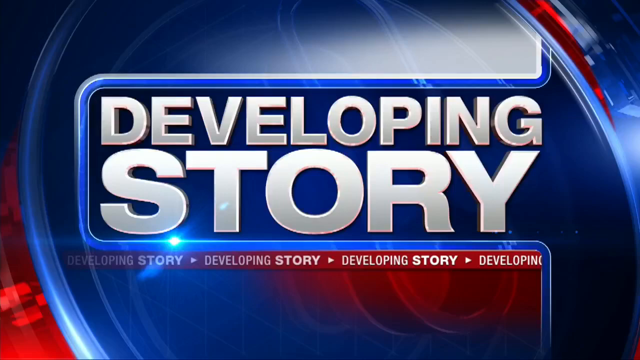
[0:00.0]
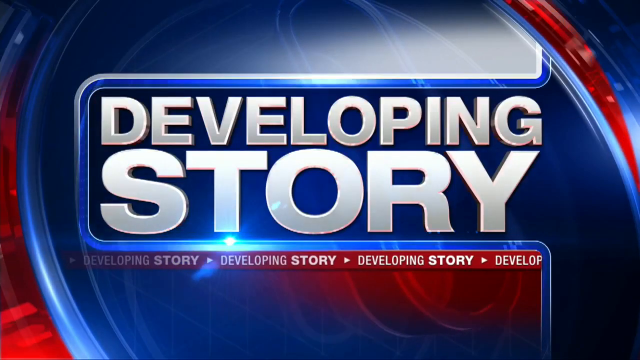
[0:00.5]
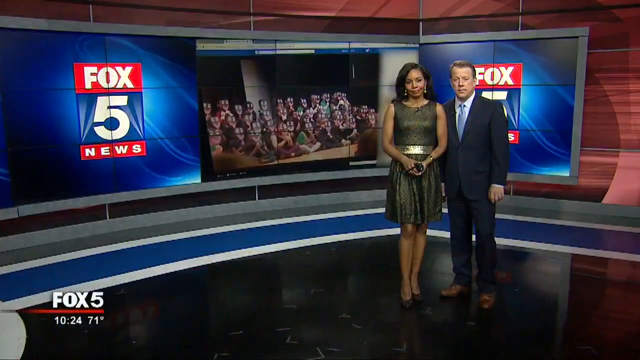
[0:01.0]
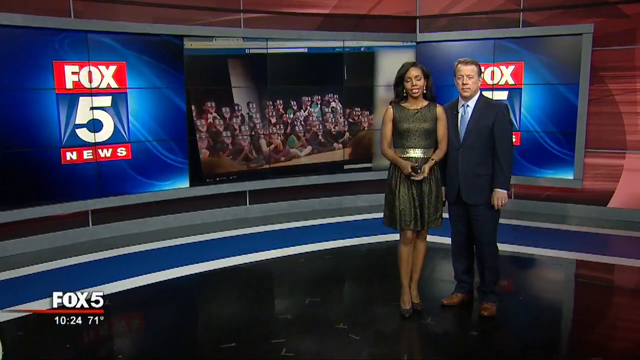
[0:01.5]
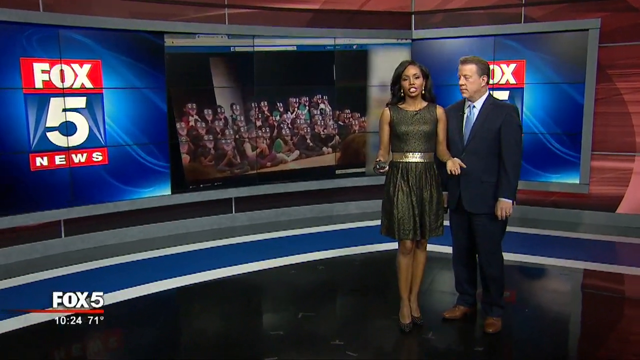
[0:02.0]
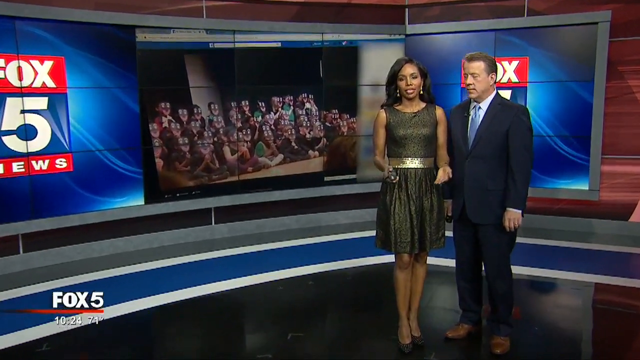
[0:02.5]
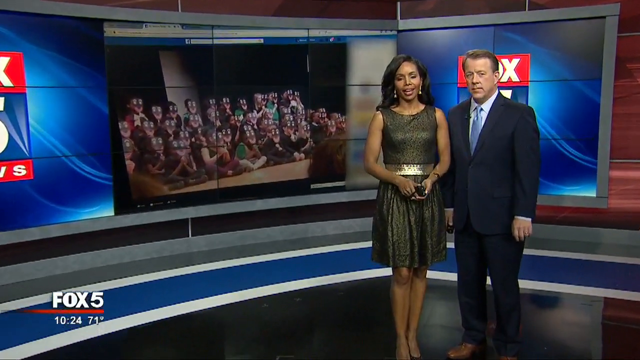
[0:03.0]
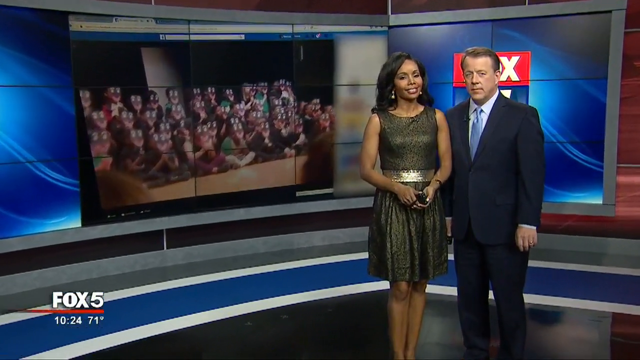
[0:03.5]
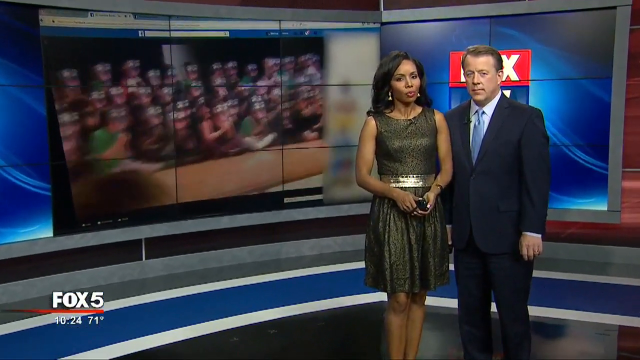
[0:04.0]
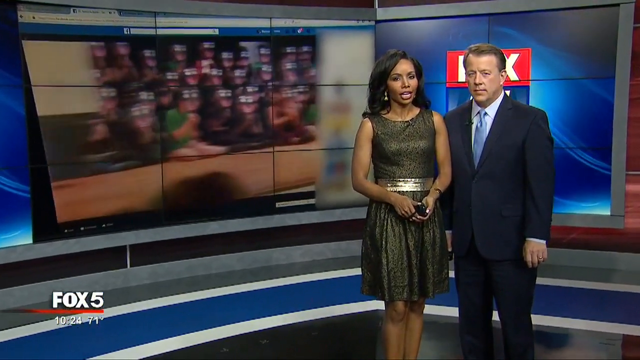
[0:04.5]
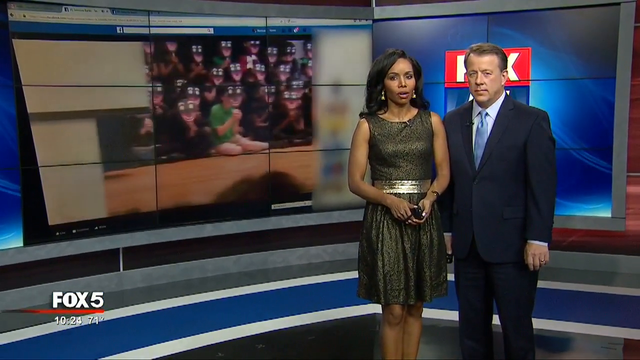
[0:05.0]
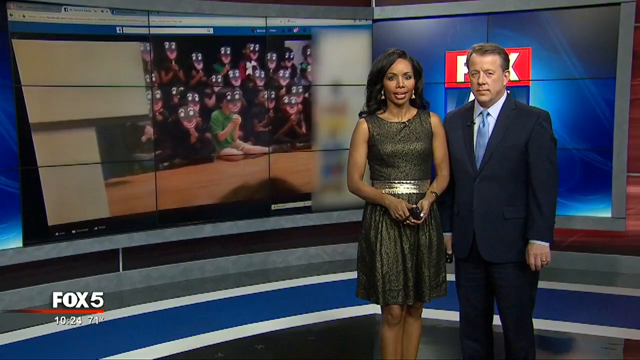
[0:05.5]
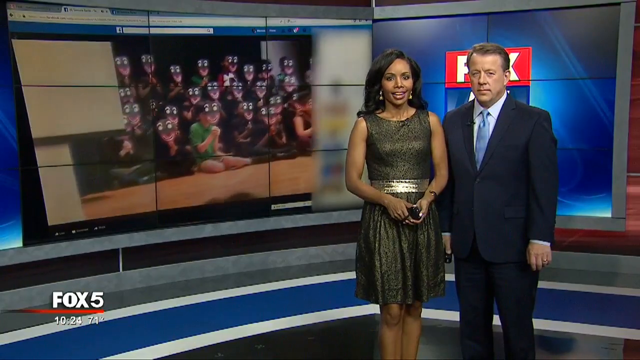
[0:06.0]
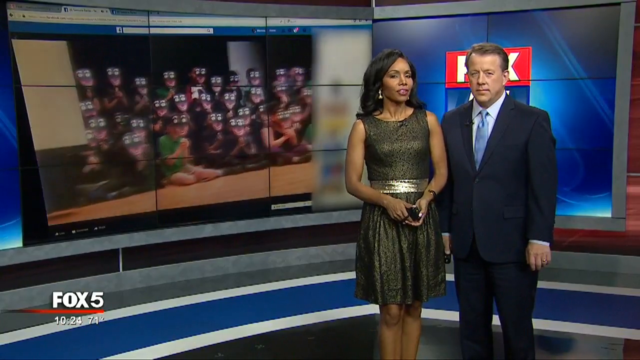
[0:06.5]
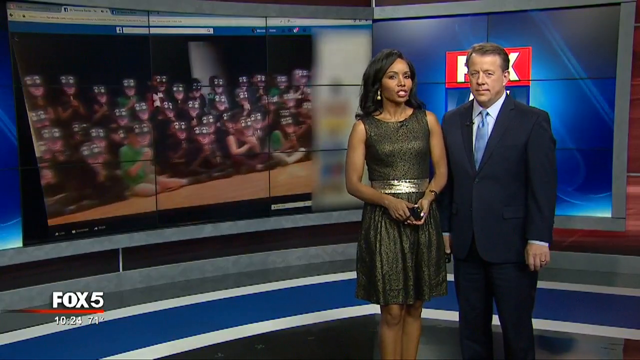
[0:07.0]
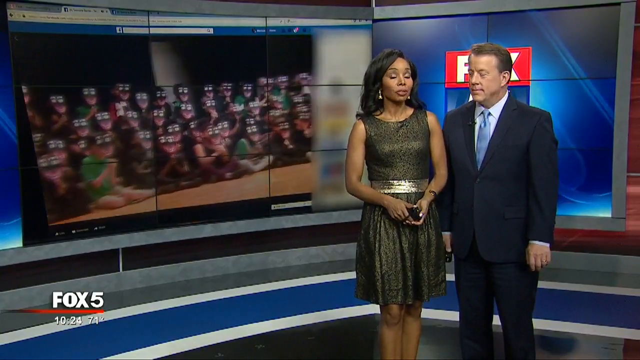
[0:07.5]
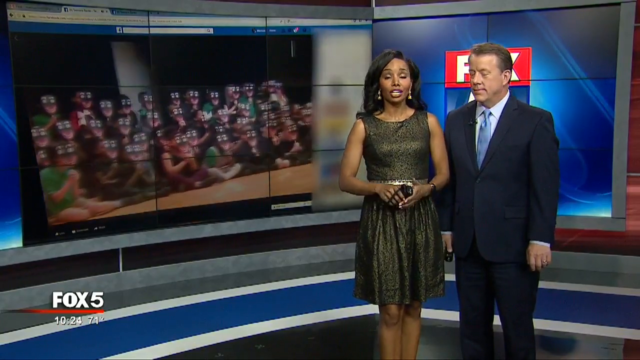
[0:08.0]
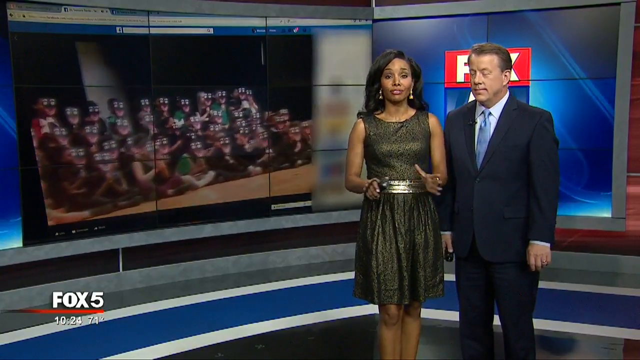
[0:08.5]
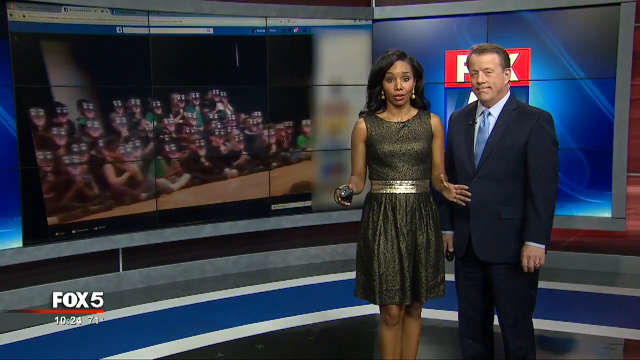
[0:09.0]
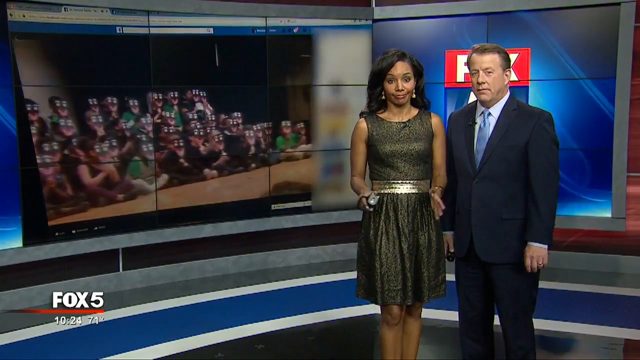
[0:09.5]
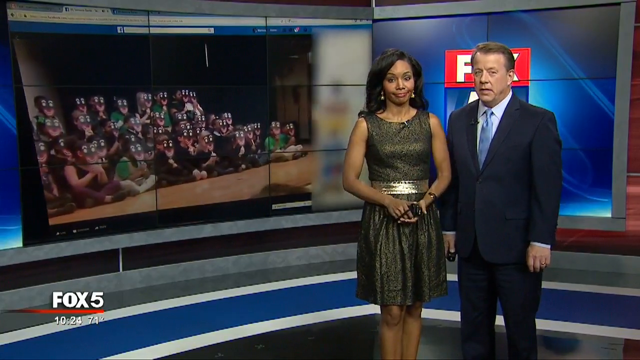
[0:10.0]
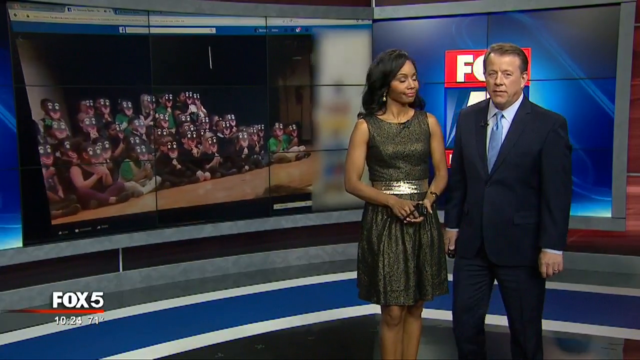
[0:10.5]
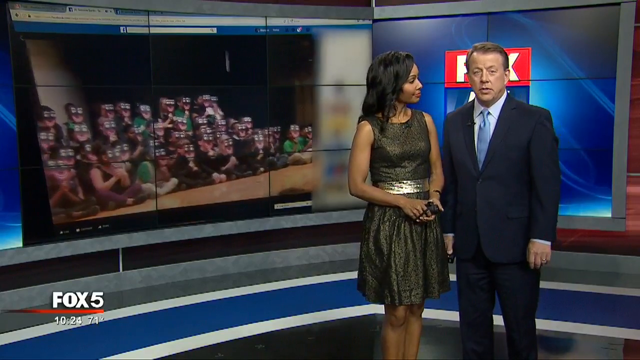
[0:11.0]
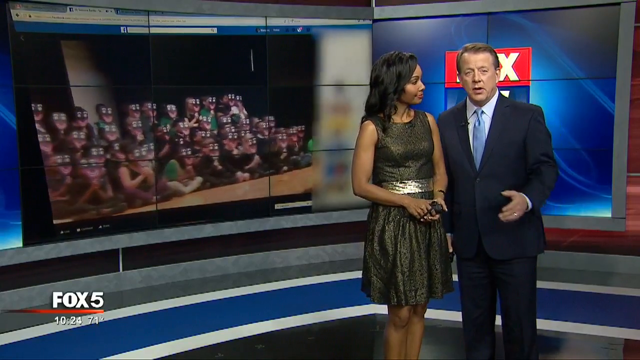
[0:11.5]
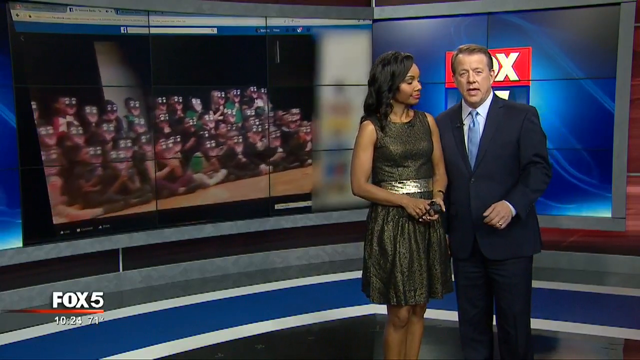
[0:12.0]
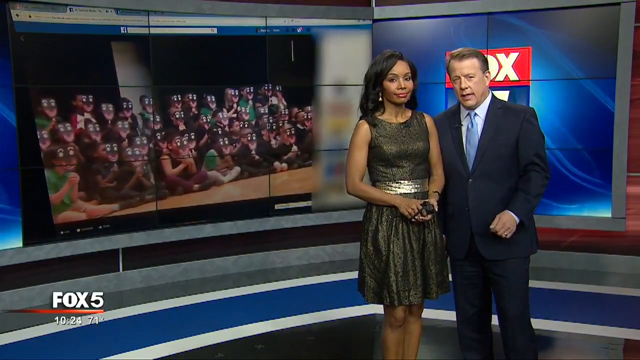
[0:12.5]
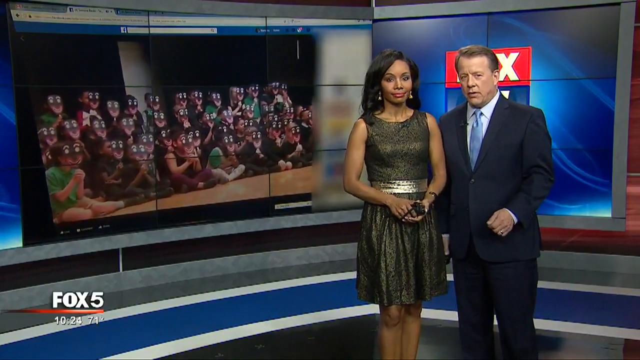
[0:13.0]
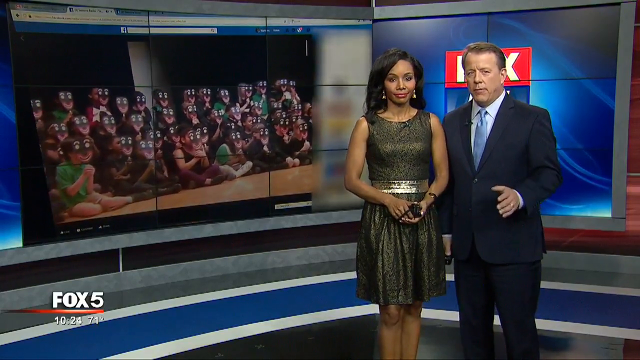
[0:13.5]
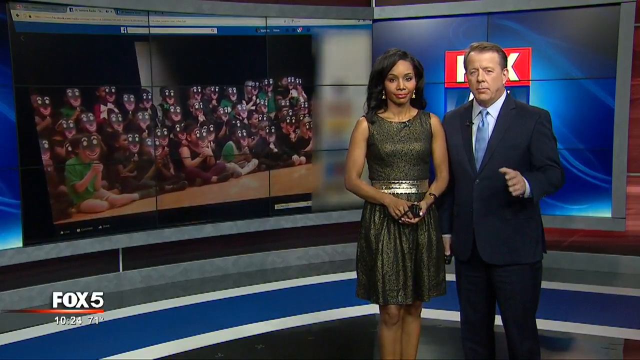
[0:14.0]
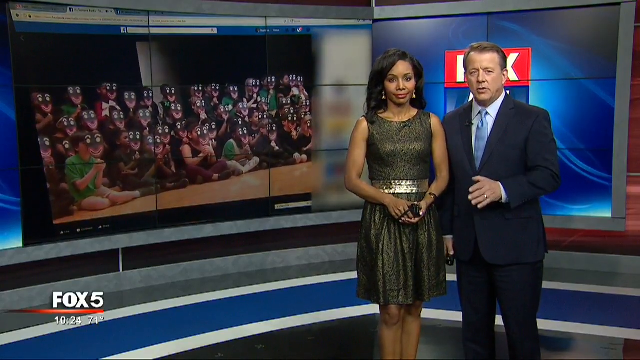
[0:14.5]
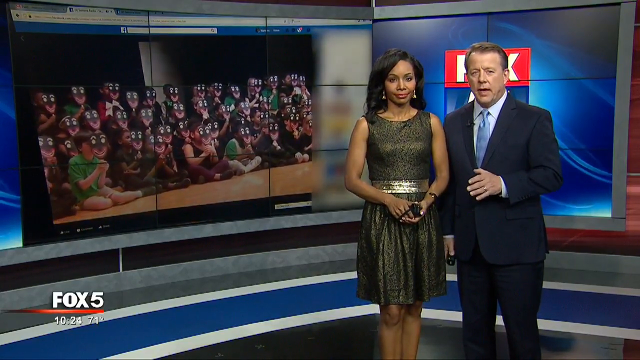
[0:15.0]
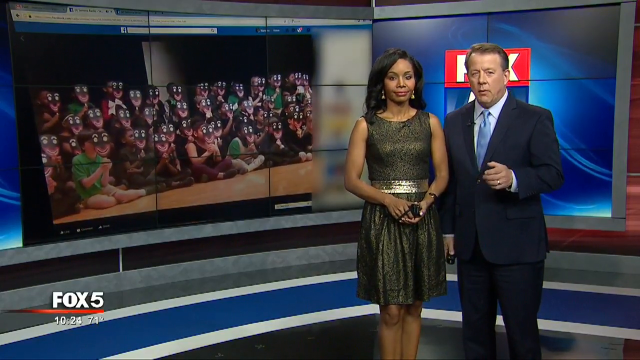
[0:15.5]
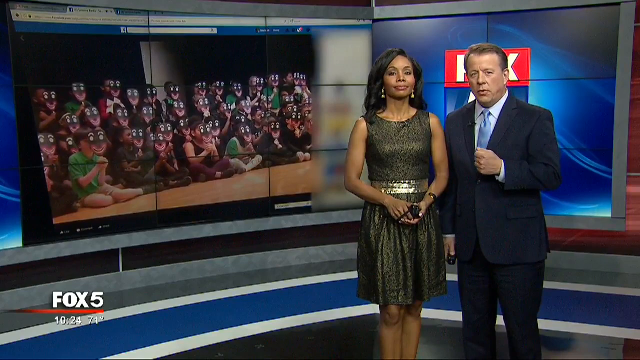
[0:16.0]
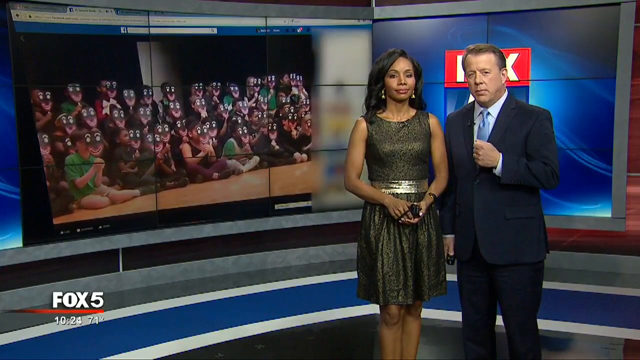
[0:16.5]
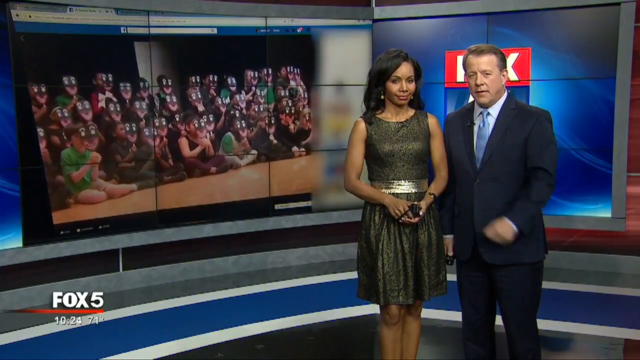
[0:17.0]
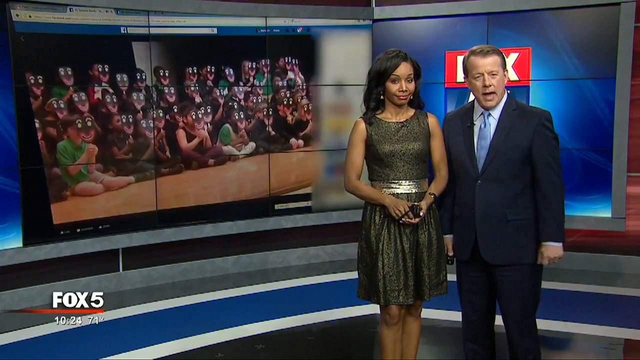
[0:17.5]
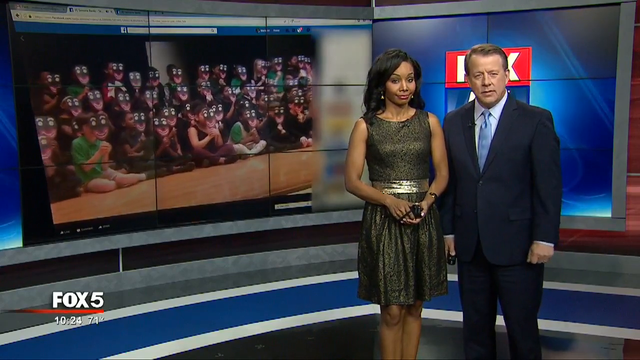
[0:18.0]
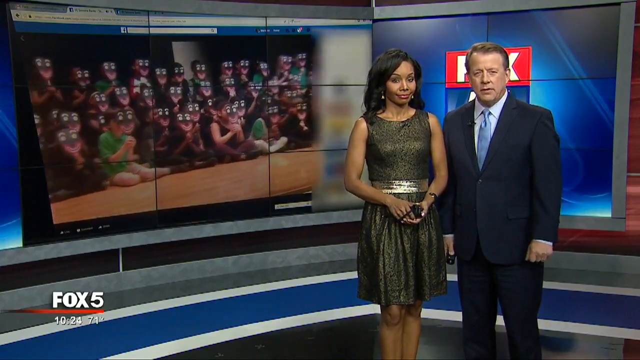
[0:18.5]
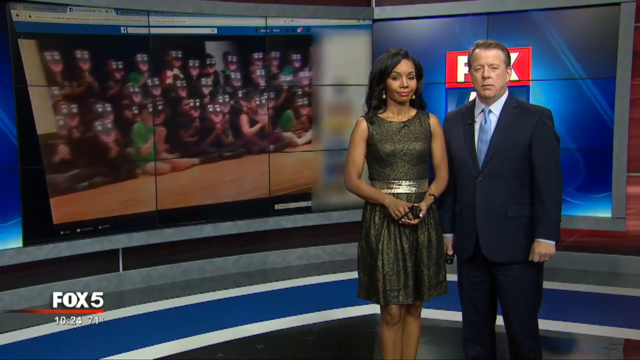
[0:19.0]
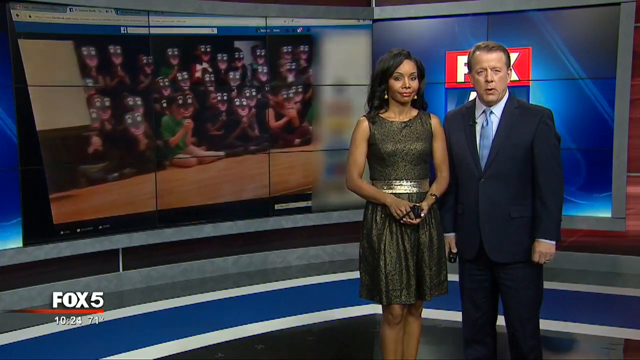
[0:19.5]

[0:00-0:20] FOX5 News shows a segment for developing stories, led by a woman and a man. The two appear the same height because she is wearing heels and he is not. The woman is a Black, African-American woman and the man is a white man. She is wearing a beautiful dress, and he is wearing a navy suit with a light blue tie. They look like news reporters. They are in a corner of a big hall, and the room is filled with a lot of blue and red, the colour scheme of Fox 5 News. Something appears to be projected behind the two reporters.